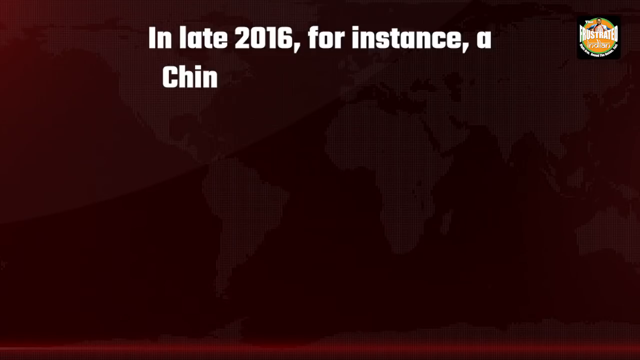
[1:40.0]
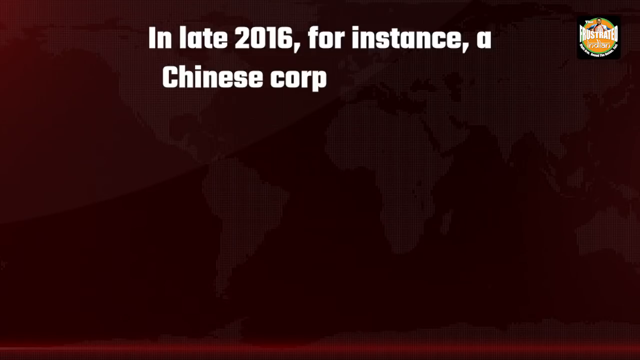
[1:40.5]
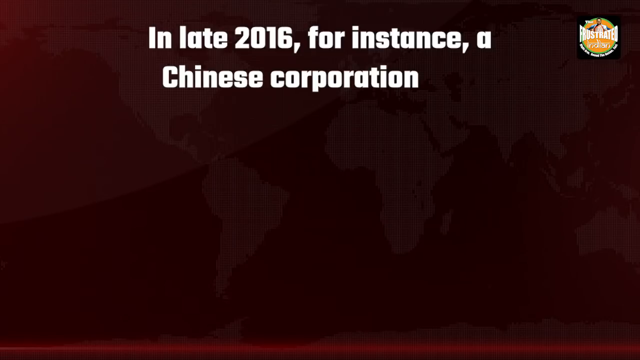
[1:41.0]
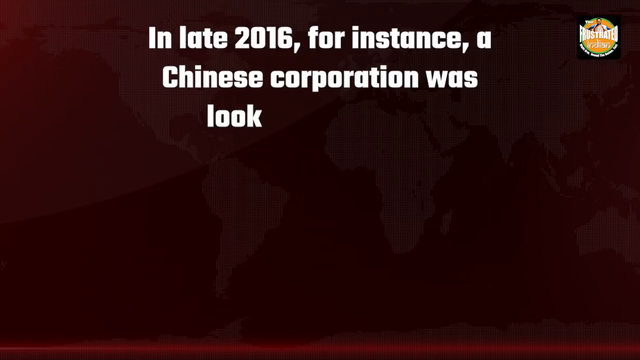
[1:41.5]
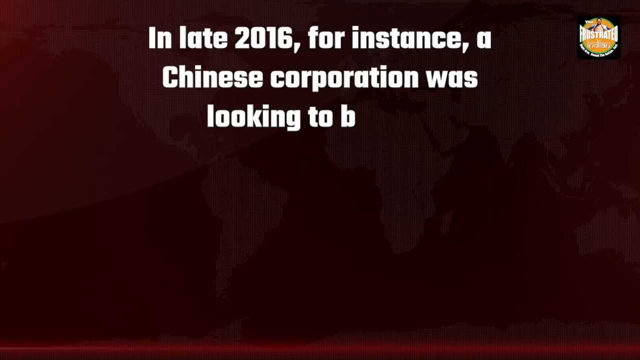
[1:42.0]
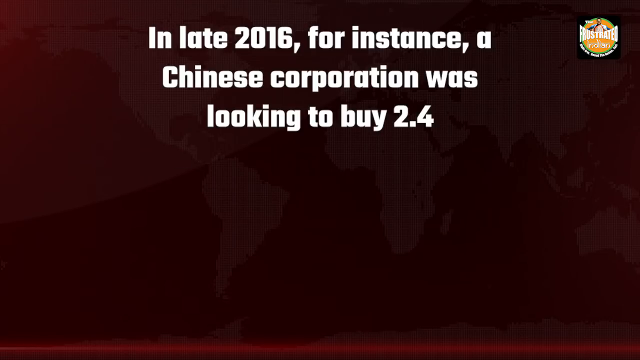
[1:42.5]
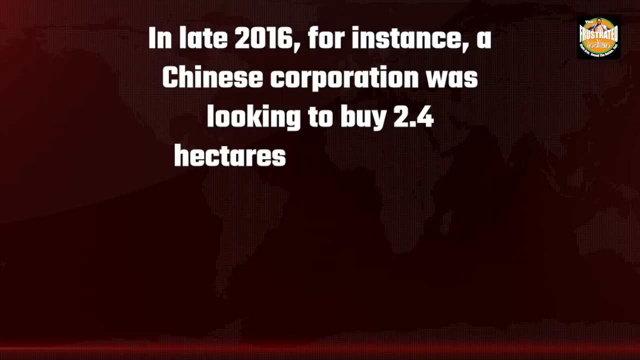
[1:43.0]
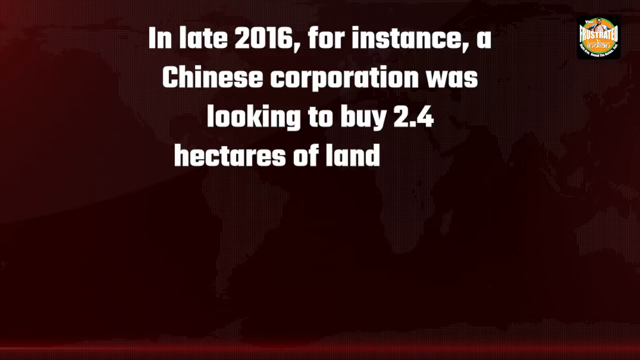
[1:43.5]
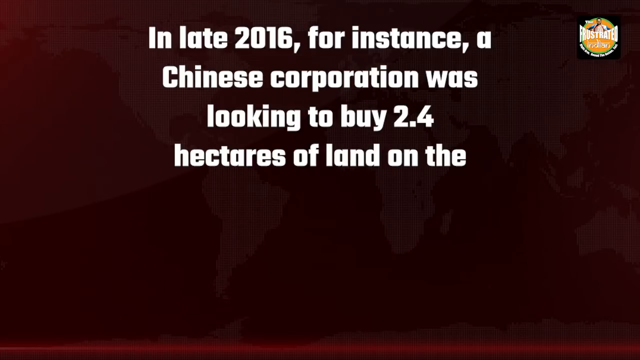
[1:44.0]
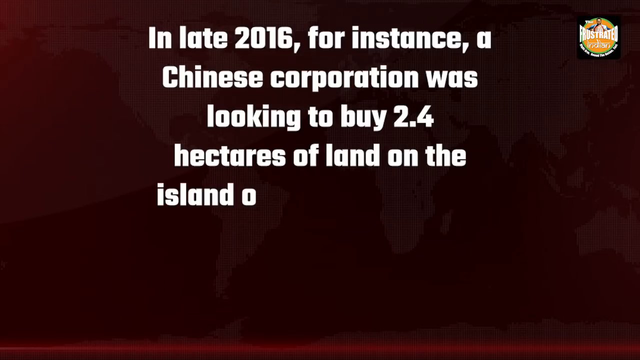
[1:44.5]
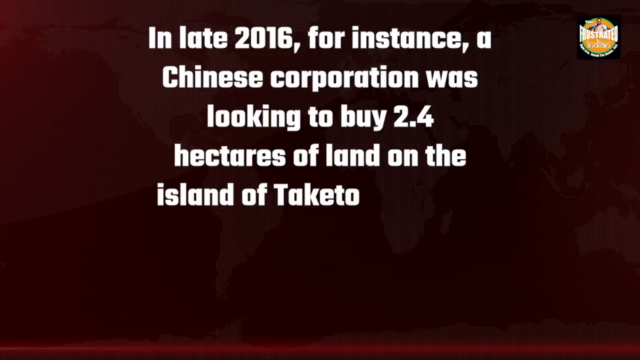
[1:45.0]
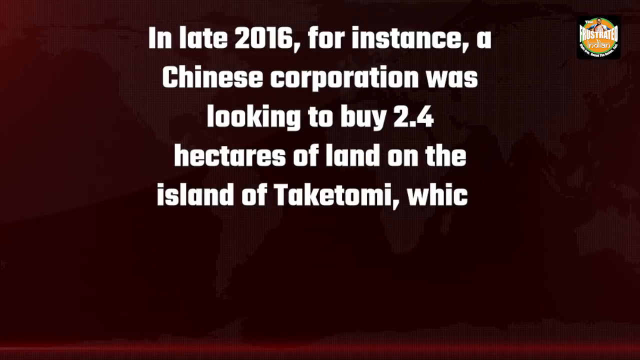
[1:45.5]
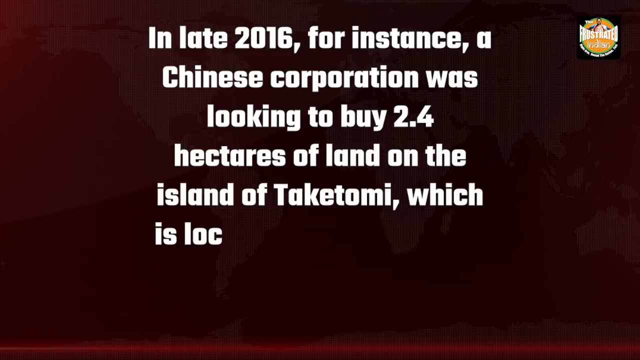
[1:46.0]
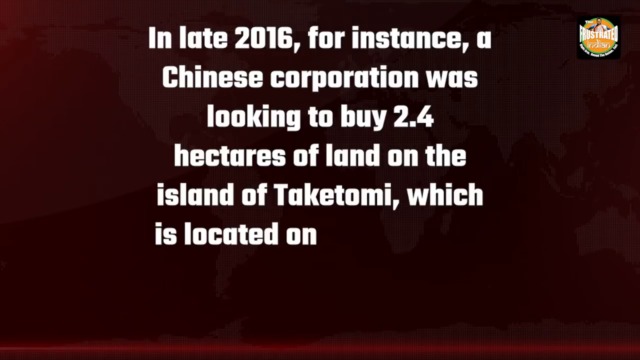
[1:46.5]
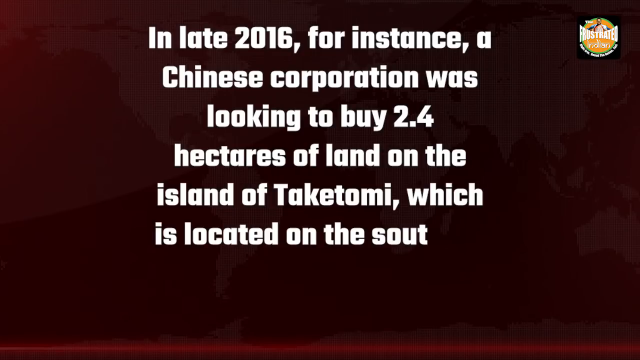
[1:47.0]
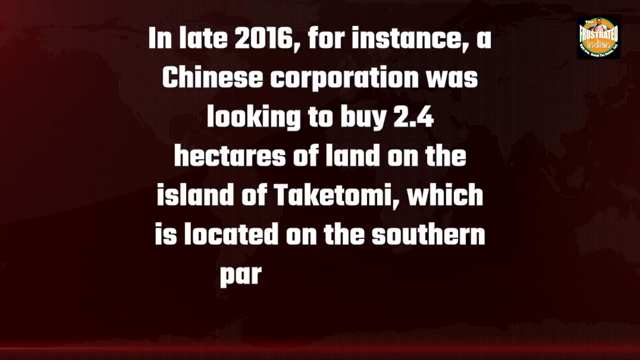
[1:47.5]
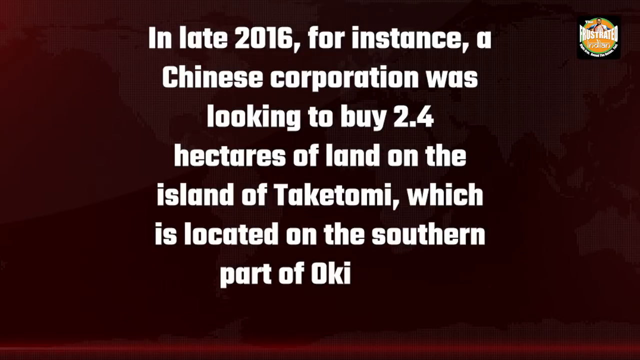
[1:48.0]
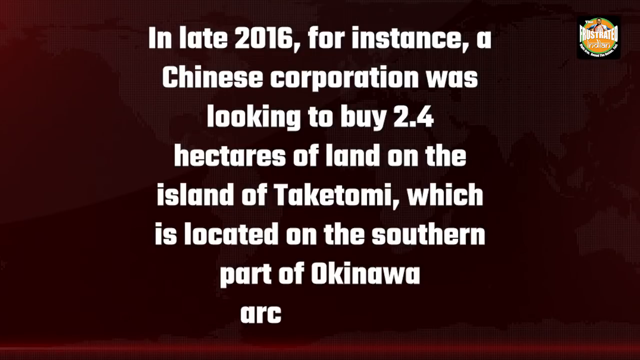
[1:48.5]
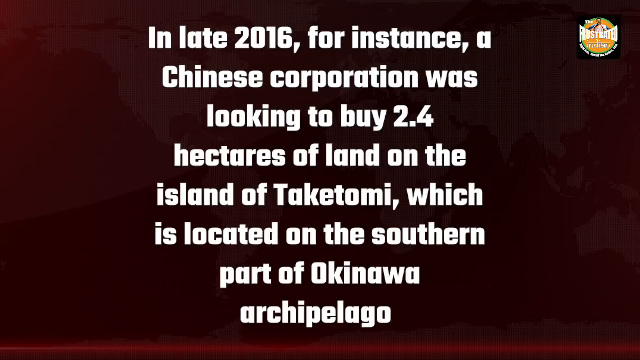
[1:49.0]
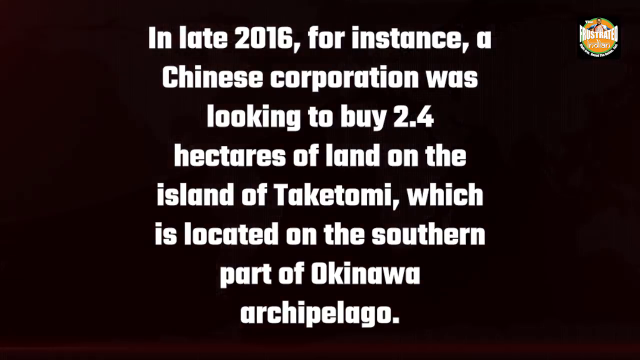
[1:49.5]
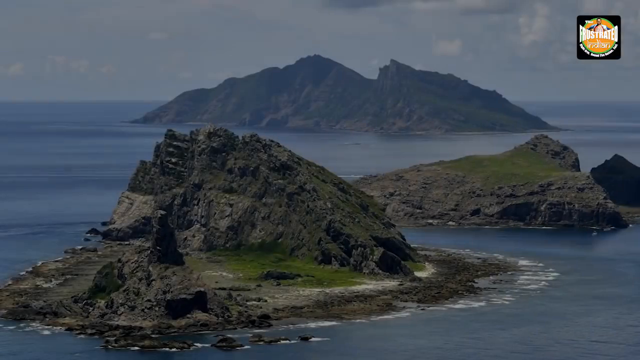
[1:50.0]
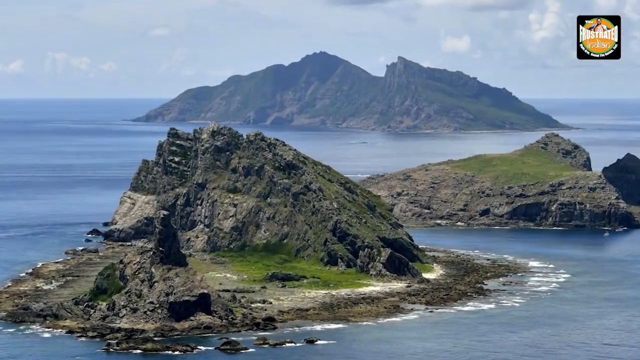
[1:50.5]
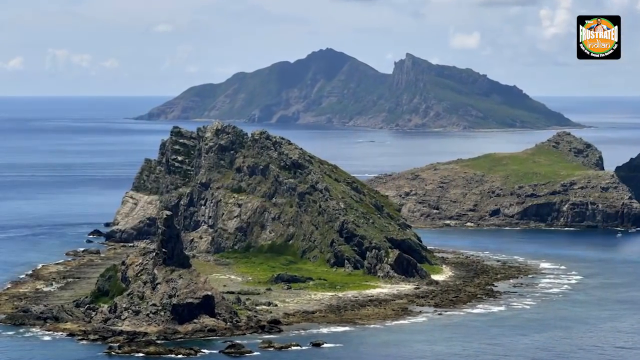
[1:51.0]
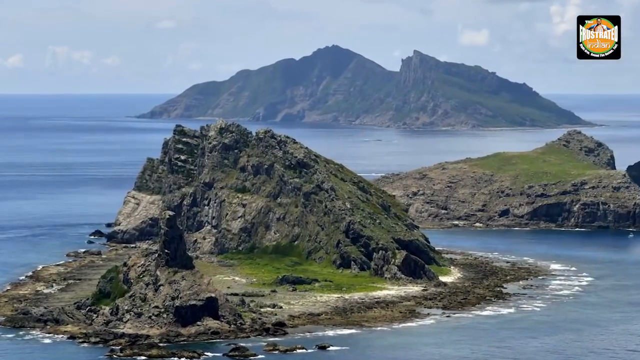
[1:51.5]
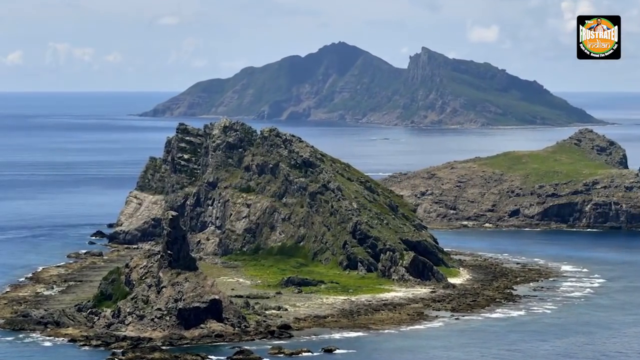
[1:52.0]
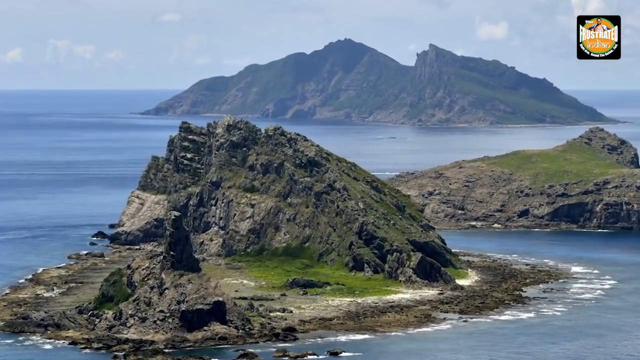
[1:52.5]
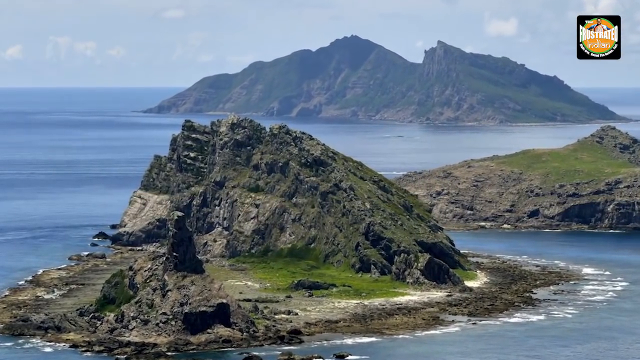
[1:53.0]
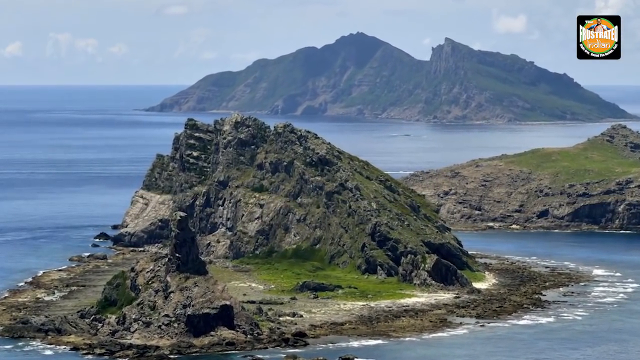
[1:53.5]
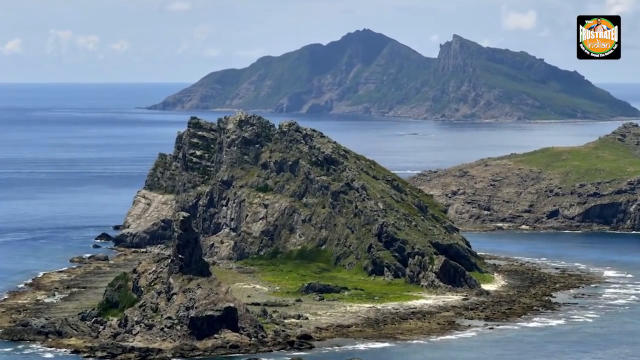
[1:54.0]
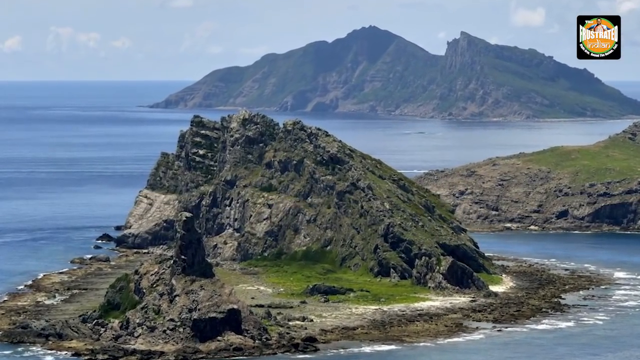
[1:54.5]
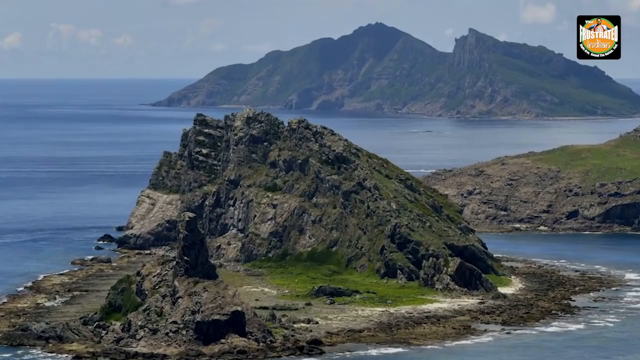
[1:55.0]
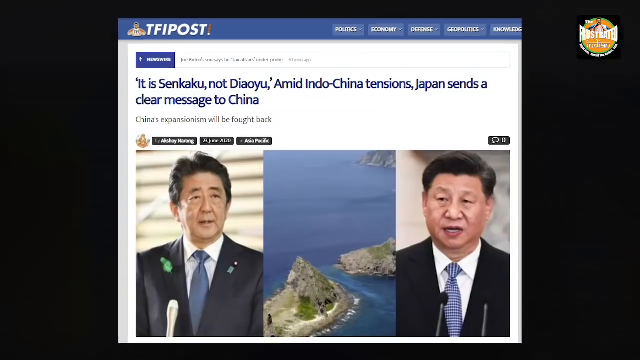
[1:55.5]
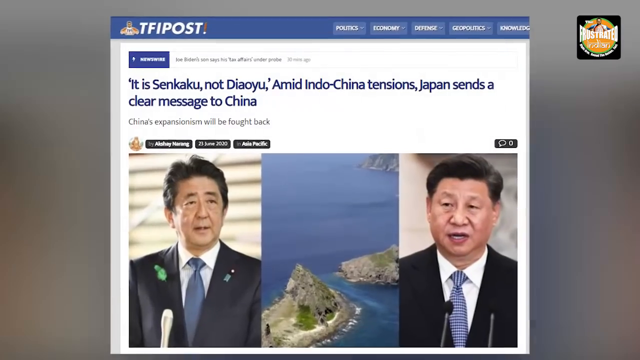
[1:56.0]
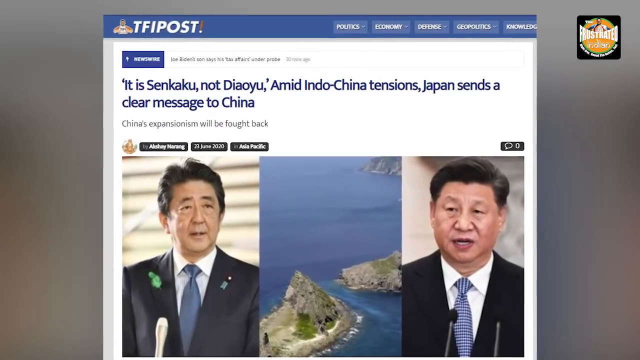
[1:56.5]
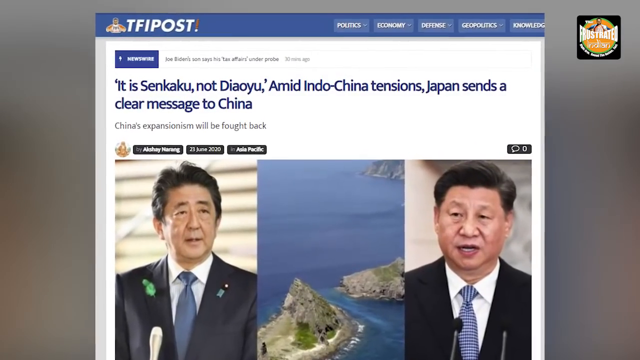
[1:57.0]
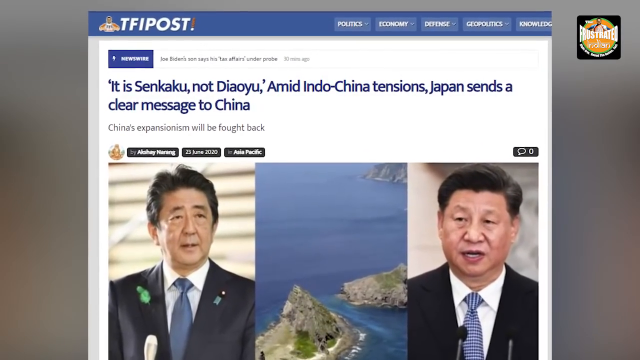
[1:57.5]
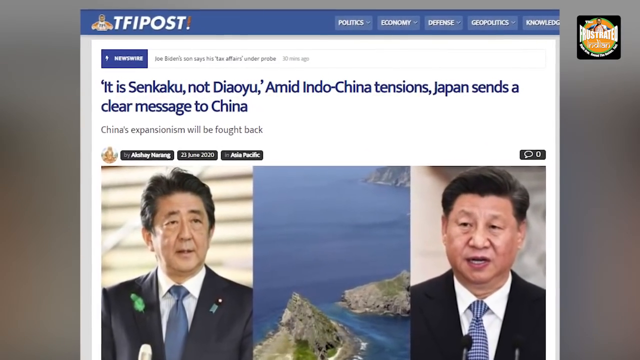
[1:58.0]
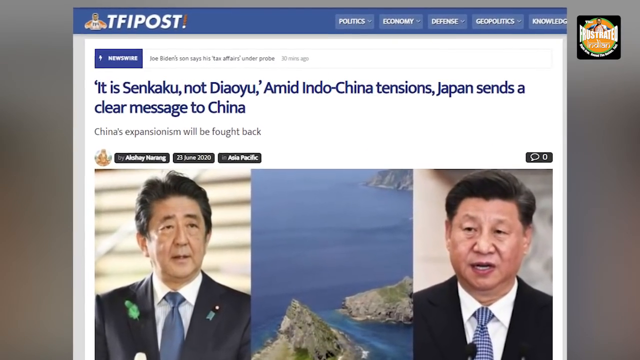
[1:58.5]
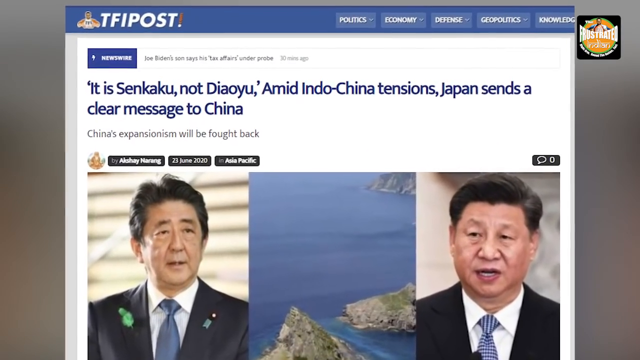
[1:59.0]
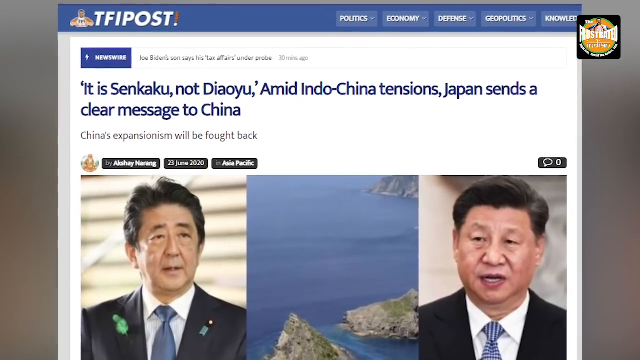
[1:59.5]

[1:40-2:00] White letters on a dark red background appear one after the other in sequence. Then a photo shows some green-brown islands surrounded by blue sea under a fairly cloudy sky. A very small logo with slightly rounded edges is visible at the top right the whole time. Next, a page of an online article is shown: at the top of the page there is a blue graphic rectangle with white writing, and the article's title is in blue font on a white background. In the upper part of the article there are three photos placed next to each other; the photos on the far left and far right show two men in elegant clothes, and the photo in the center shows islands in the middle of the sea.